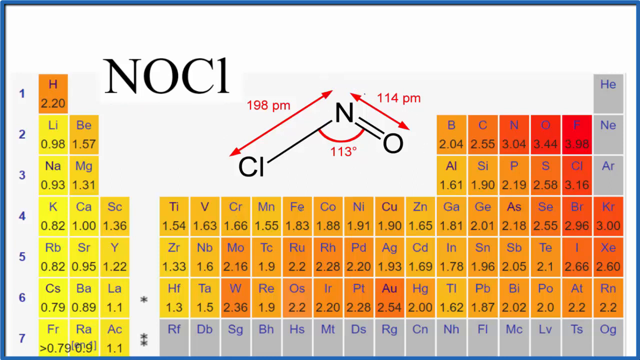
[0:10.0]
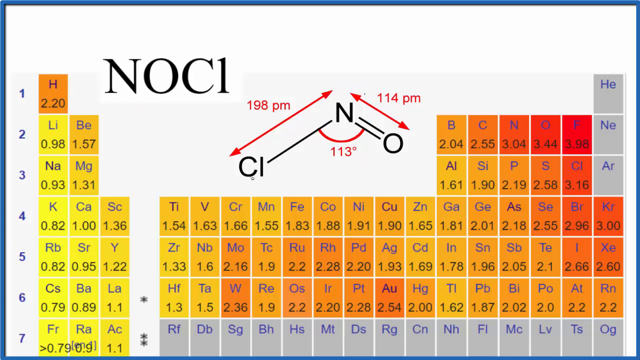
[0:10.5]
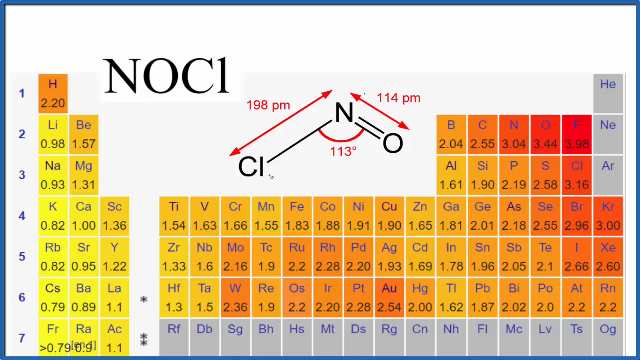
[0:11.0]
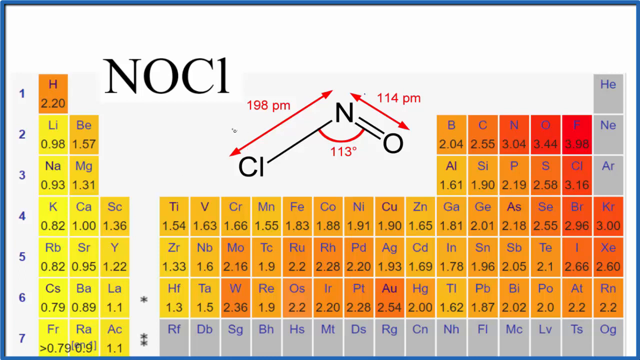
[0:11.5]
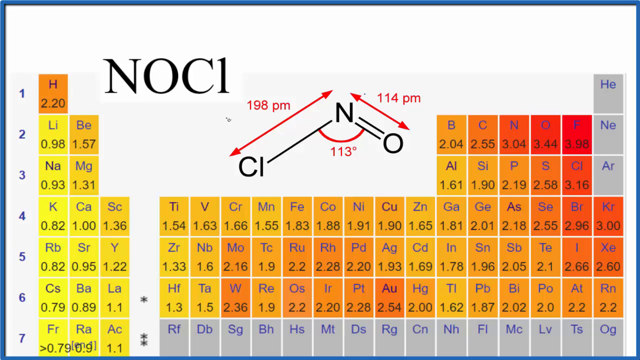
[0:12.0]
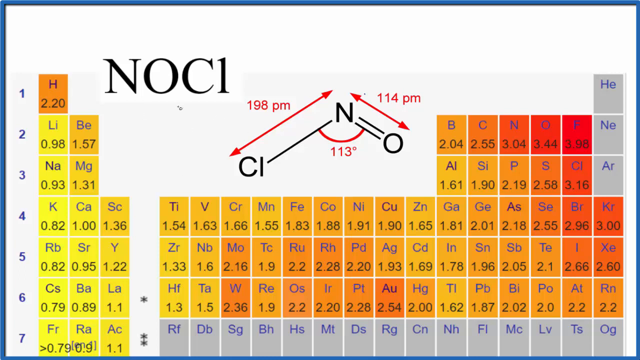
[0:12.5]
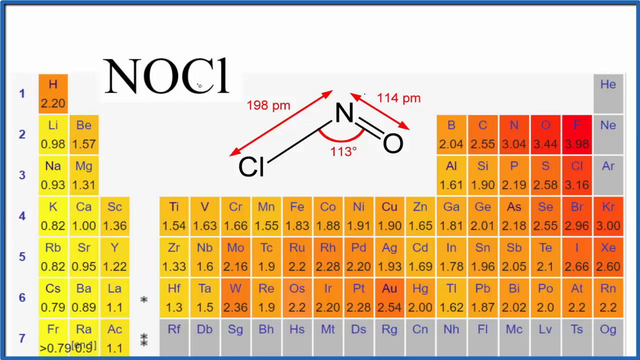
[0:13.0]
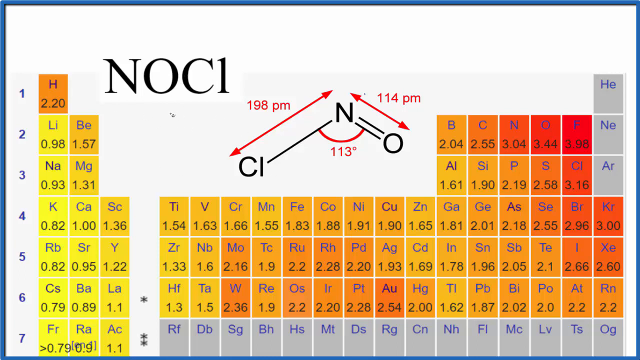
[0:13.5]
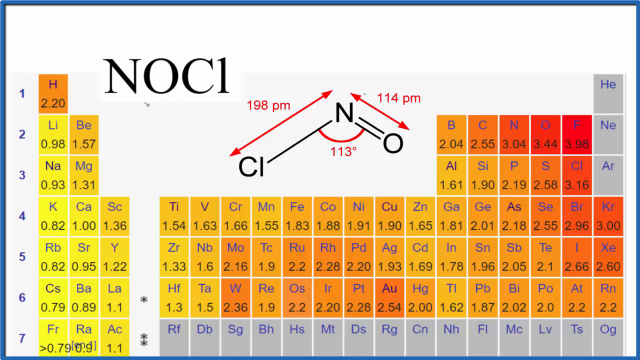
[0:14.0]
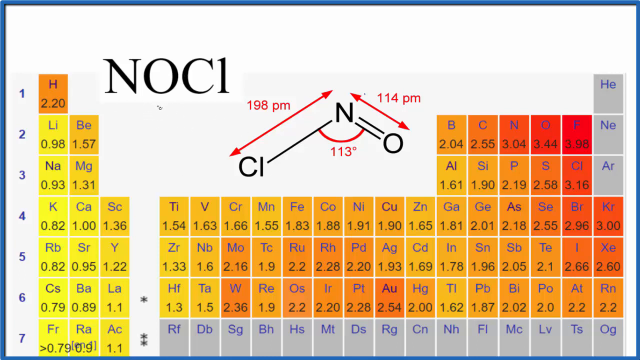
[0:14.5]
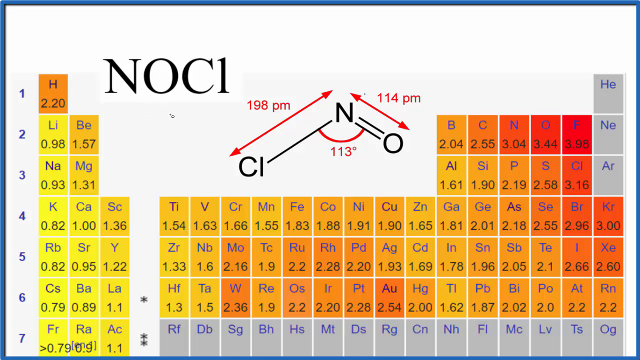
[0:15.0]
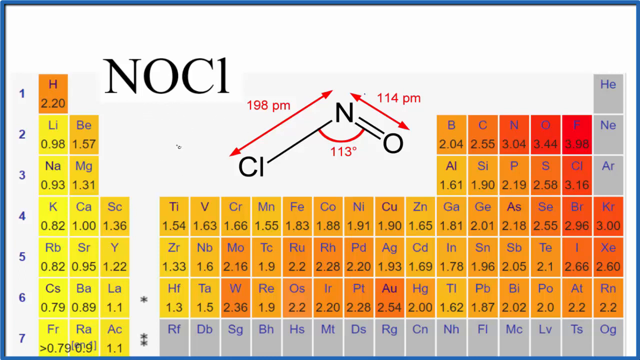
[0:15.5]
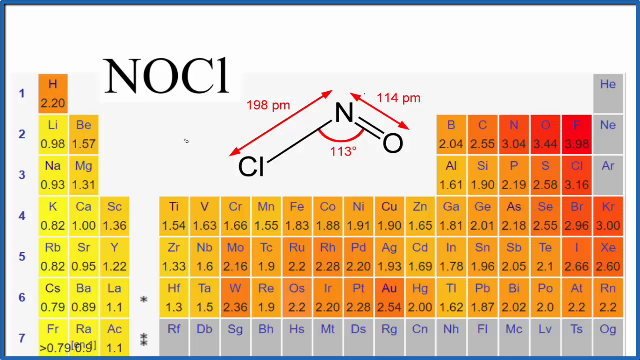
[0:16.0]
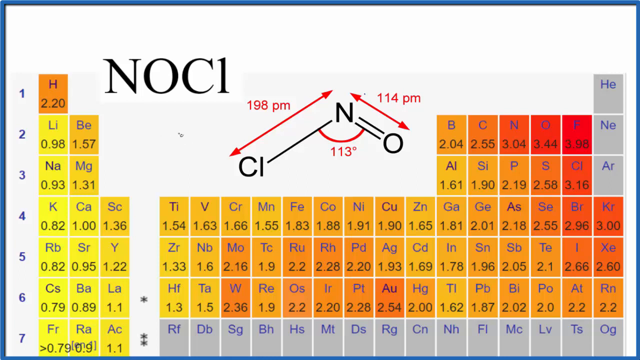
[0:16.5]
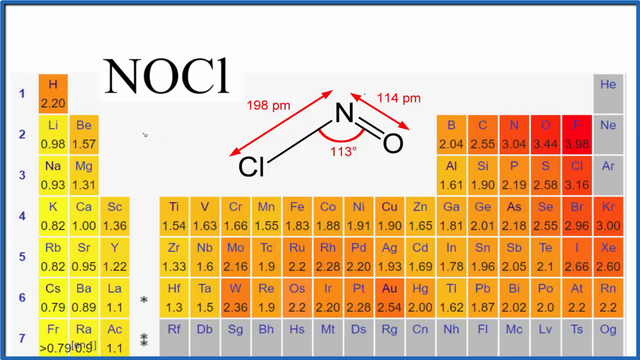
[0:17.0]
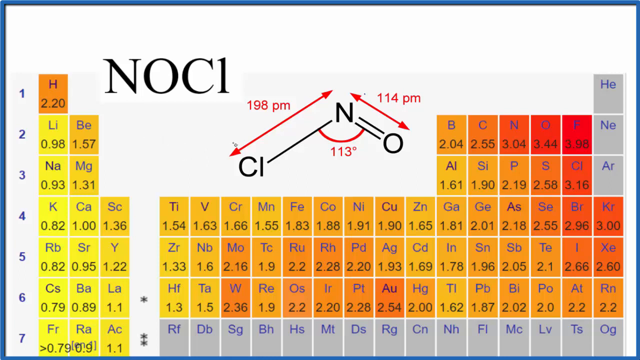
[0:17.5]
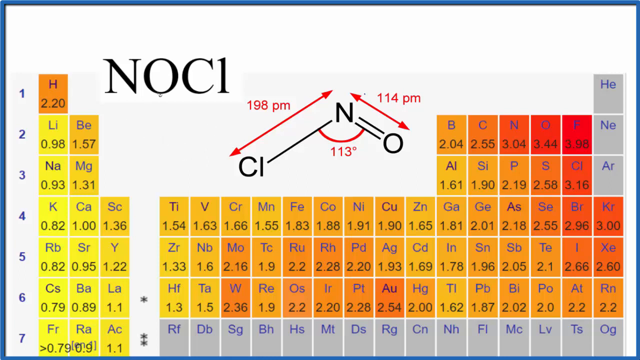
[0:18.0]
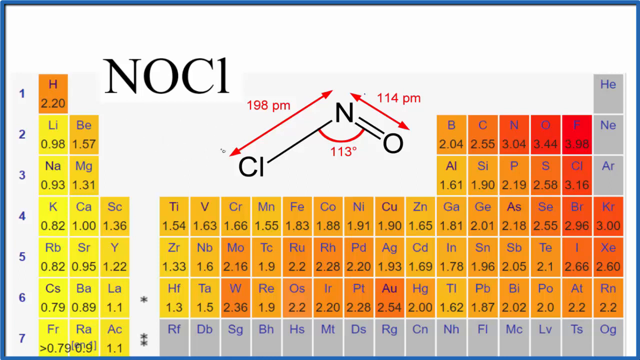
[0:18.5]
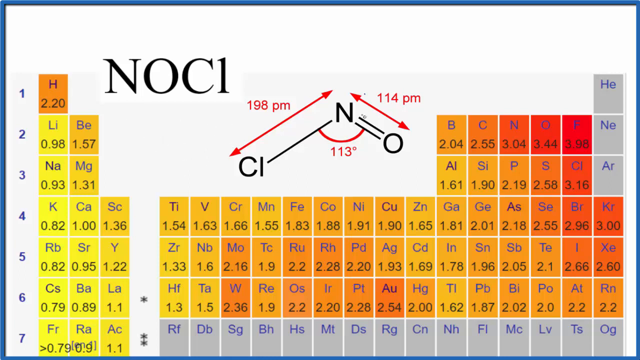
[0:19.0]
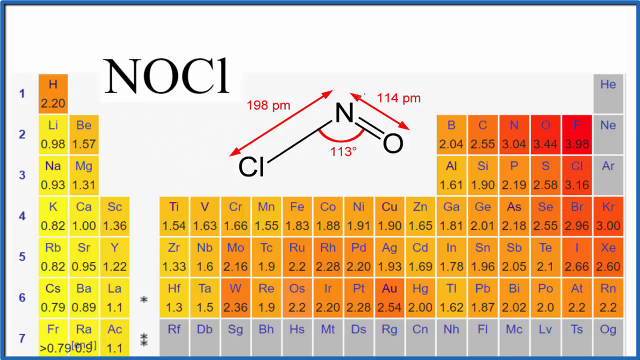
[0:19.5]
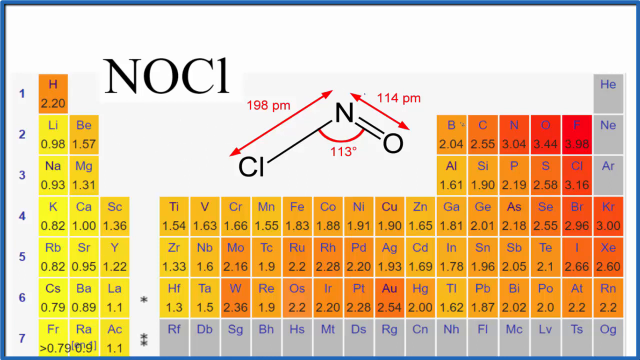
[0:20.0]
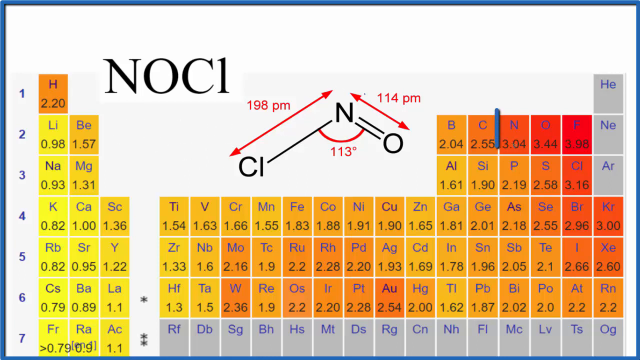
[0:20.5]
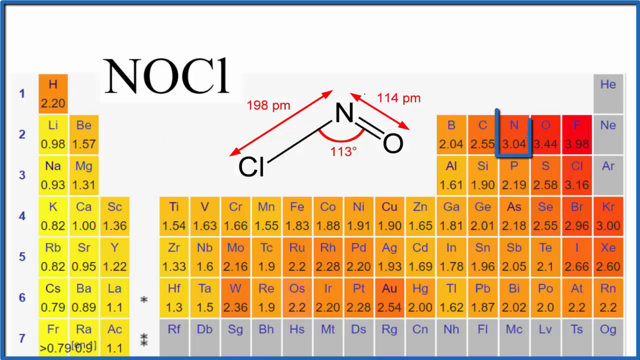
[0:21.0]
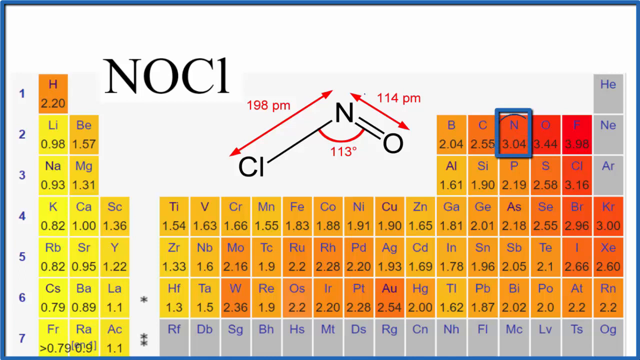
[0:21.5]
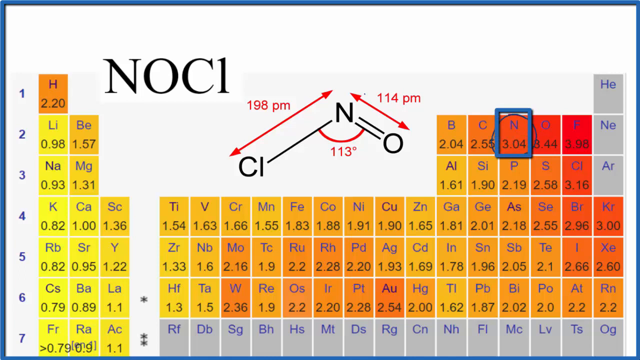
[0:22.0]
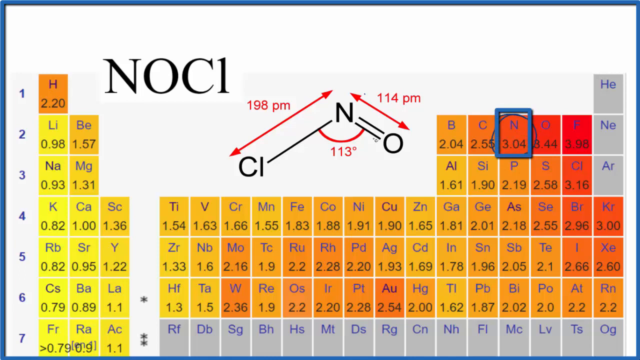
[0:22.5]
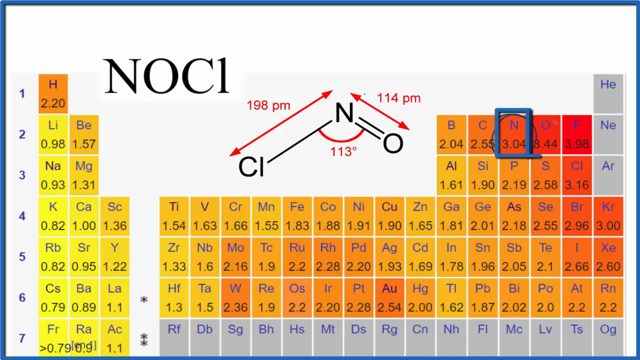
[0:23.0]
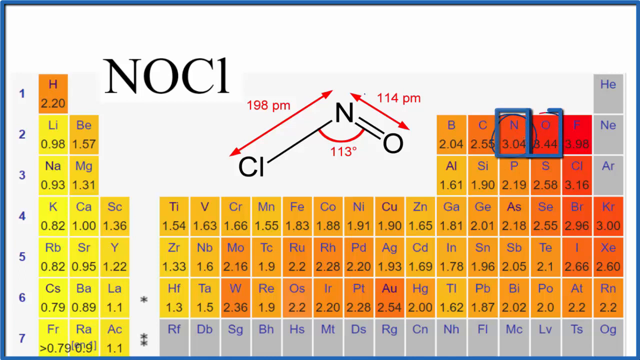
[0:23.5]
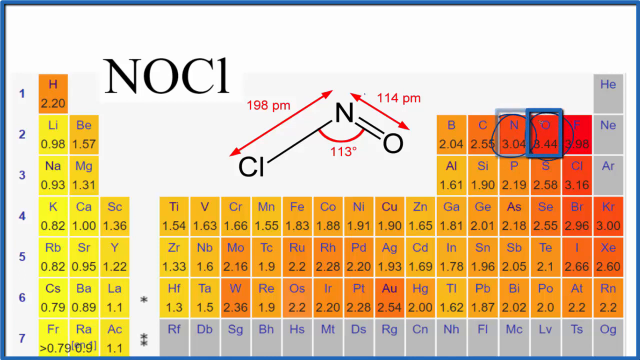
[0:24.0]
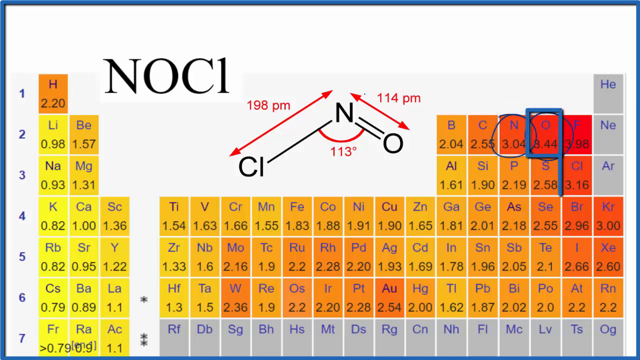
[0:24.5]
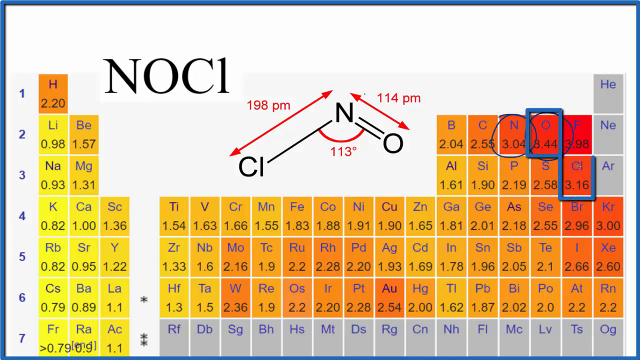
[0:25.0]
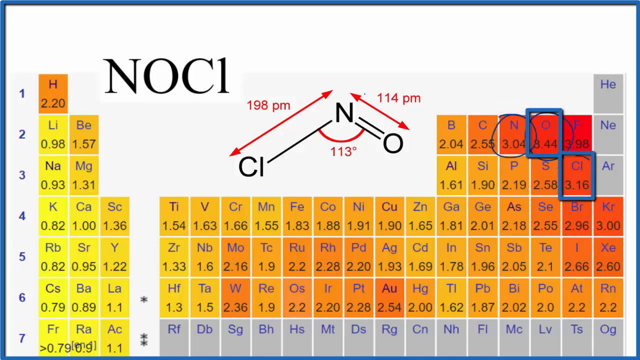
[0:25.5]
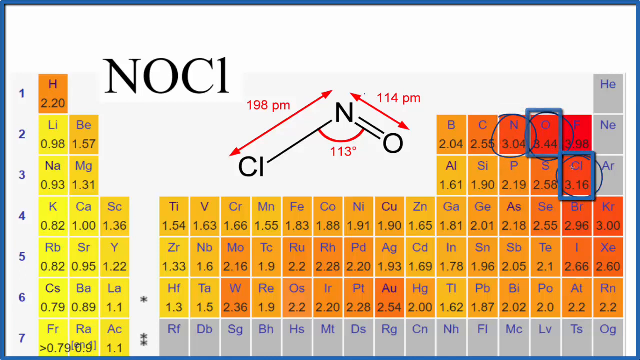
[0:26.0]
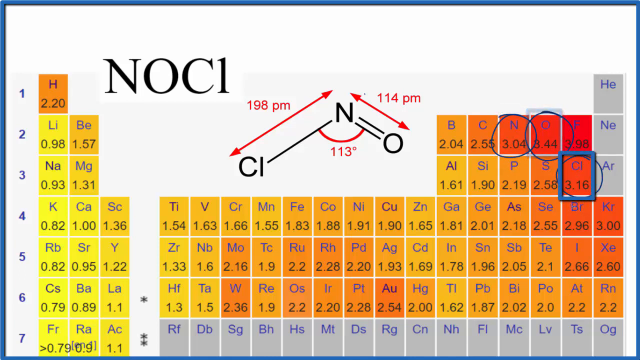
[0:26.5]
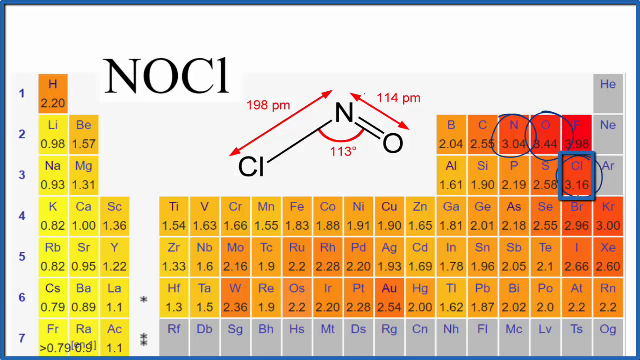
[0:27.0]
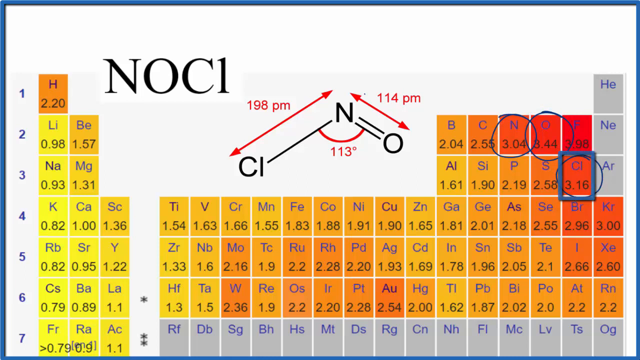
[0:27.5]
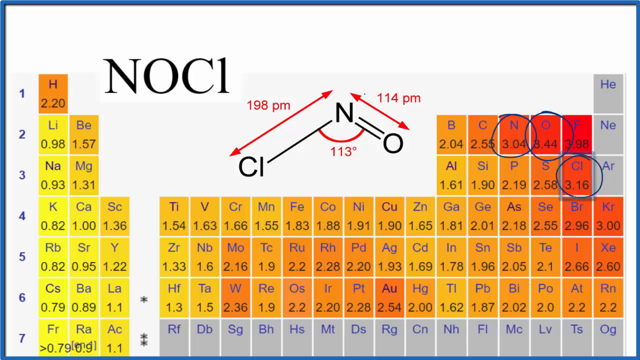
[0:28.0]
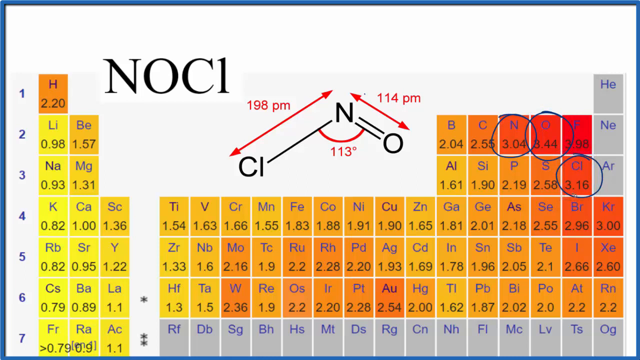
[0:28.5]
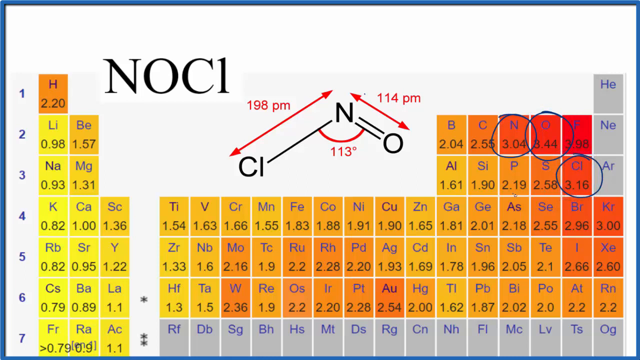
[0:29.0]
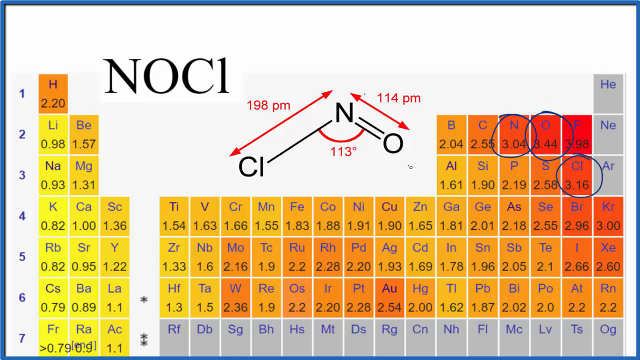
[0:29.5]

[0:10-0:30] There are now no lines anywhere. The cursor goes down to the CI, goes up under NOC1 and bounces around under it, moves down a little, moves around in a circle, goes over the N, and then moves to the right, three rows over, to the N on the periodic table. That square is dark orange with an N at the top and "3.04" below it. A dark blue border is put around the square, and then a black circle is put around it as well. Another square to the right is the O, with "3.44" under it; it also gets a blue square and a black circle. The blue square around the N vanishes. Down to the right, CI with "3.16" gets a blue square and a circle. The blue square goes off the O, and then off the CI. The cursor goes back toward the little diagram in the center.